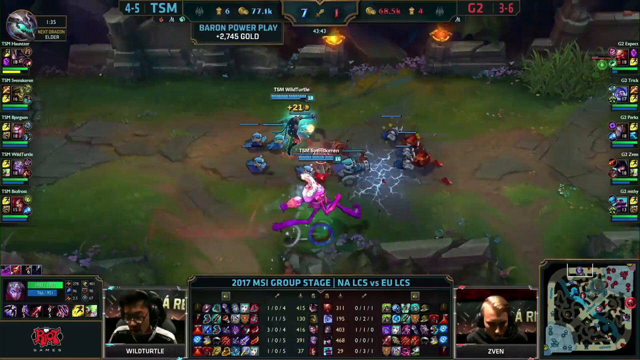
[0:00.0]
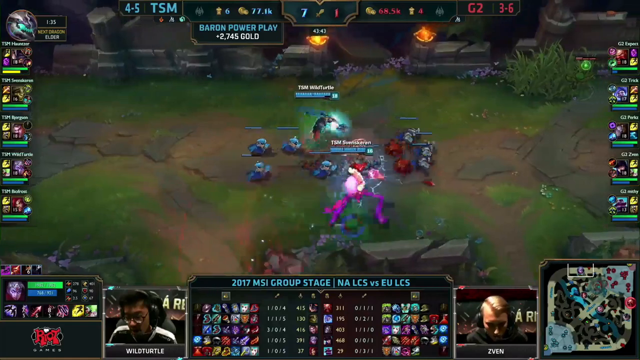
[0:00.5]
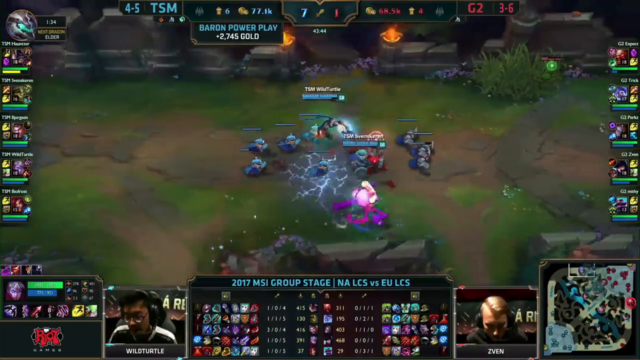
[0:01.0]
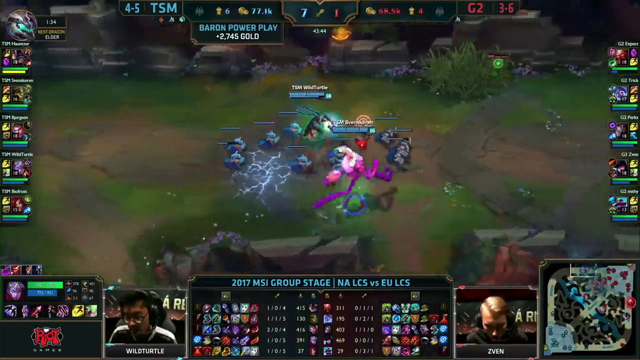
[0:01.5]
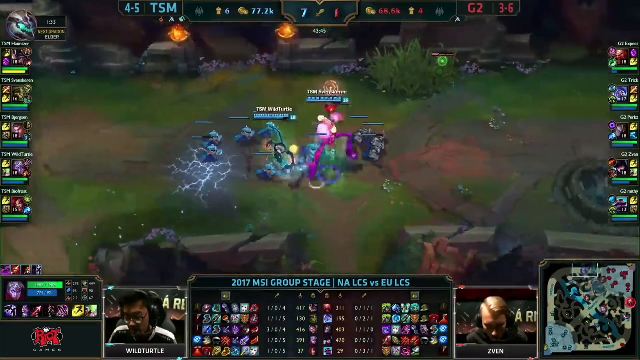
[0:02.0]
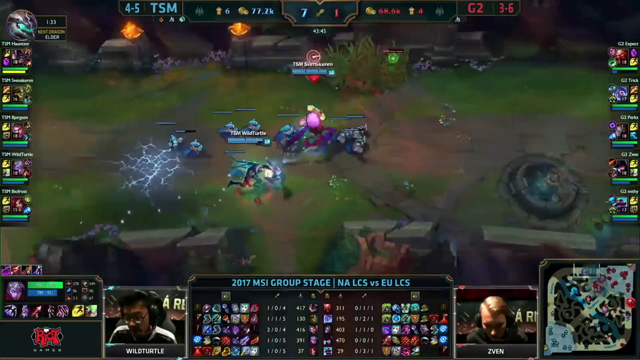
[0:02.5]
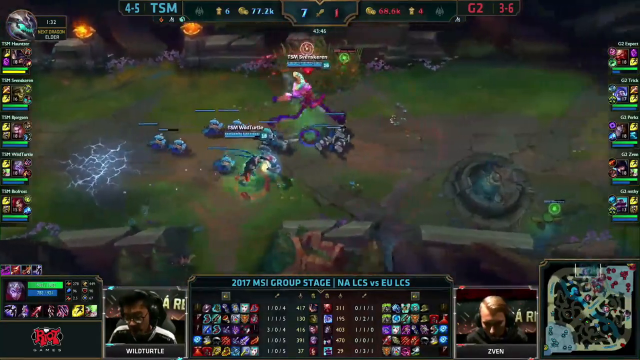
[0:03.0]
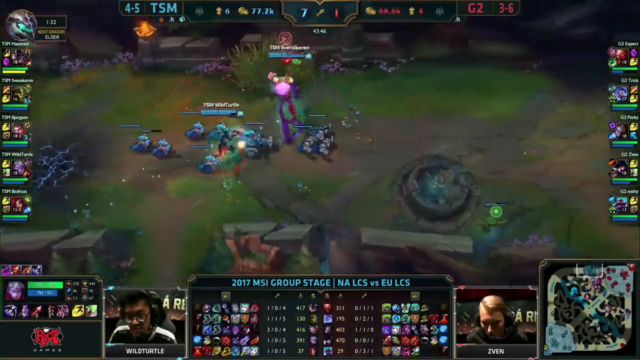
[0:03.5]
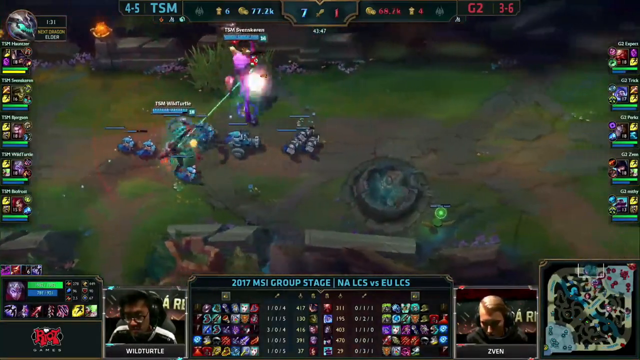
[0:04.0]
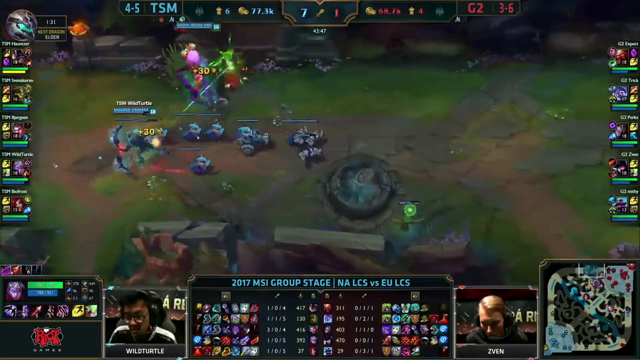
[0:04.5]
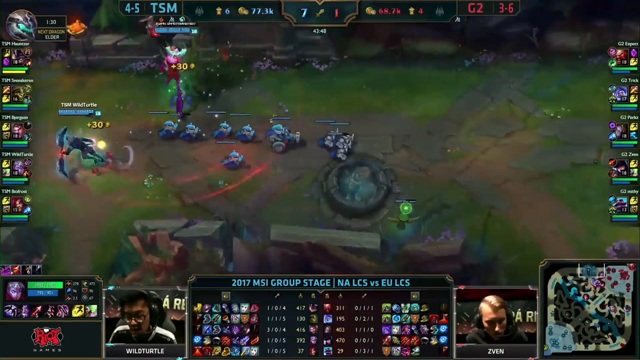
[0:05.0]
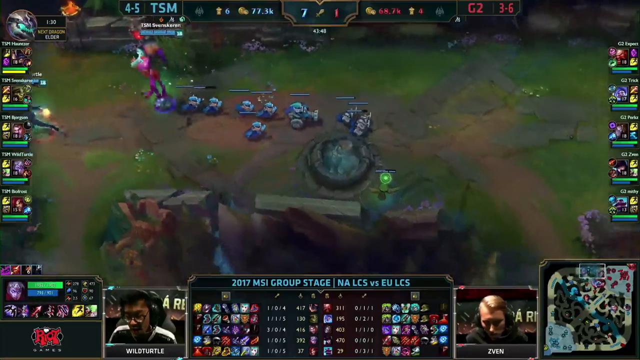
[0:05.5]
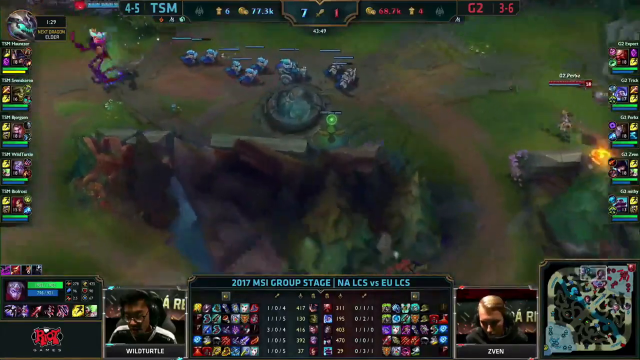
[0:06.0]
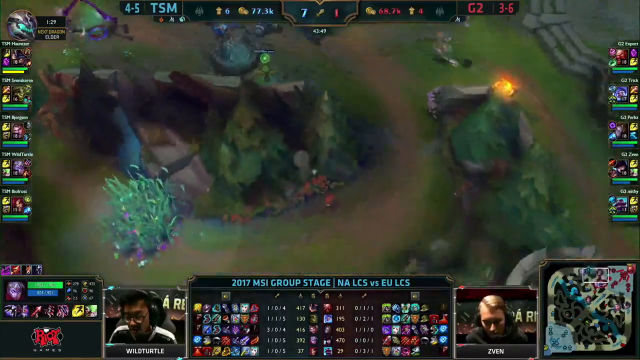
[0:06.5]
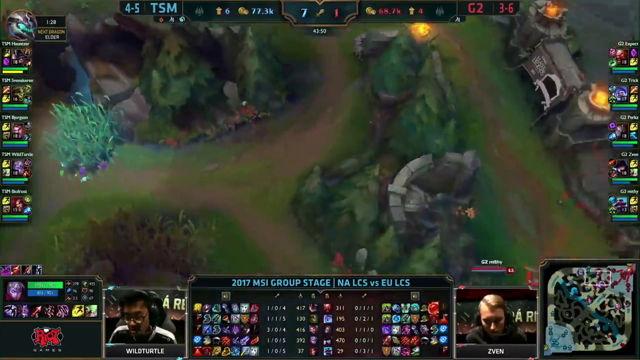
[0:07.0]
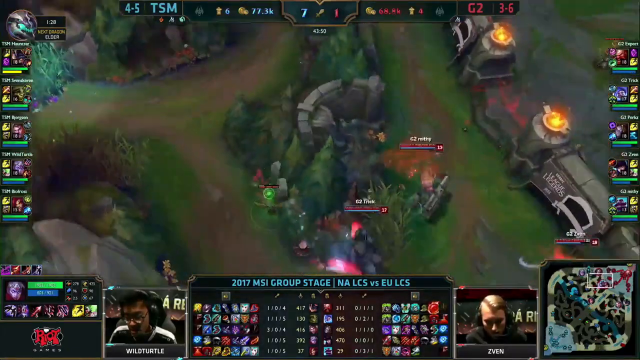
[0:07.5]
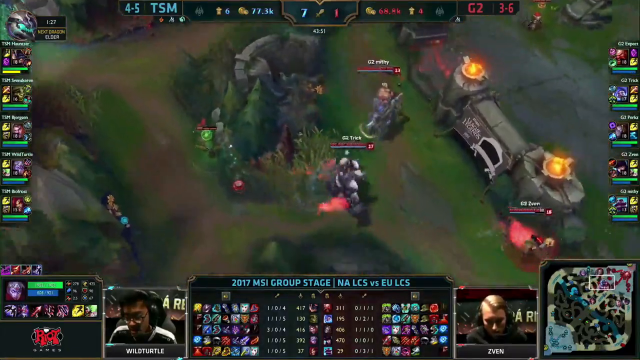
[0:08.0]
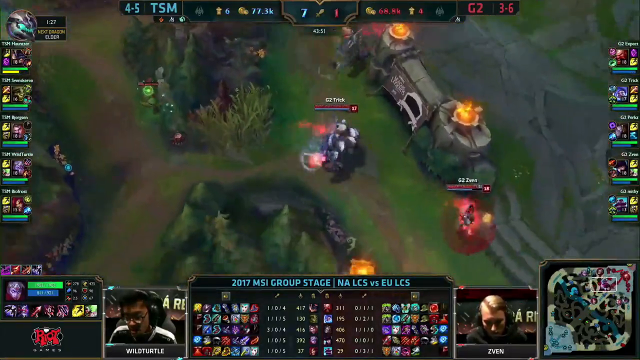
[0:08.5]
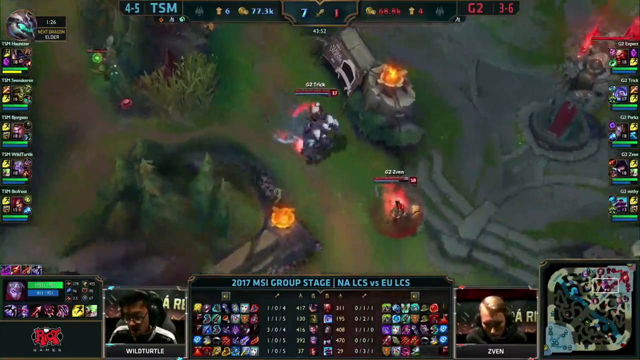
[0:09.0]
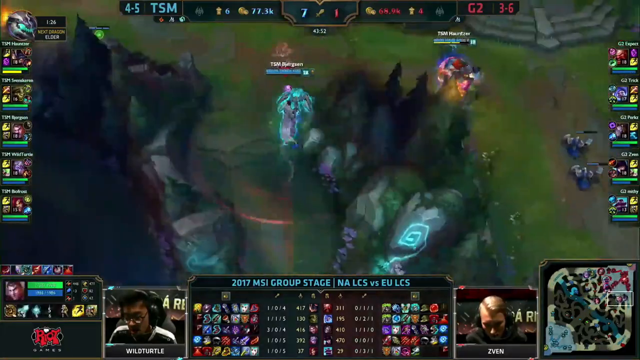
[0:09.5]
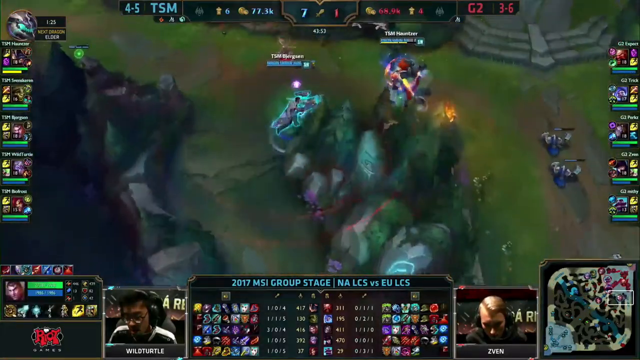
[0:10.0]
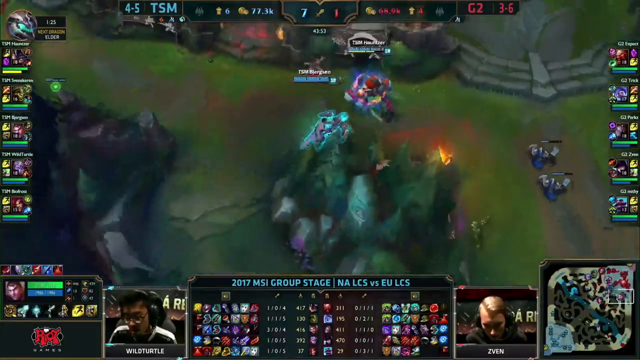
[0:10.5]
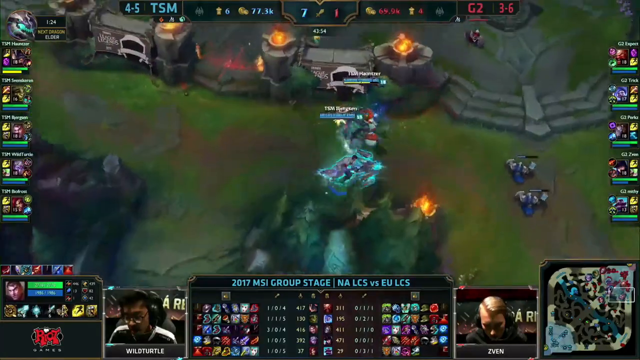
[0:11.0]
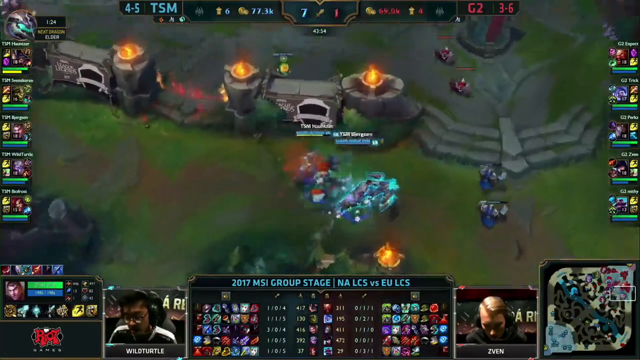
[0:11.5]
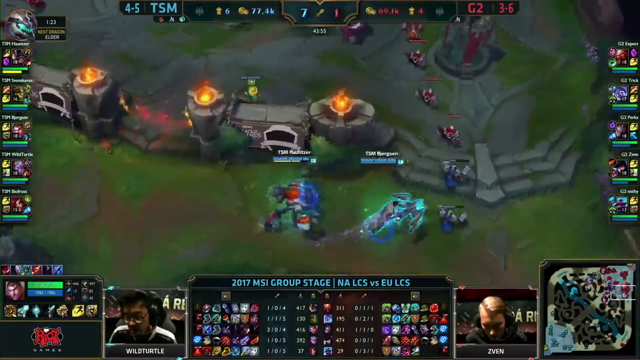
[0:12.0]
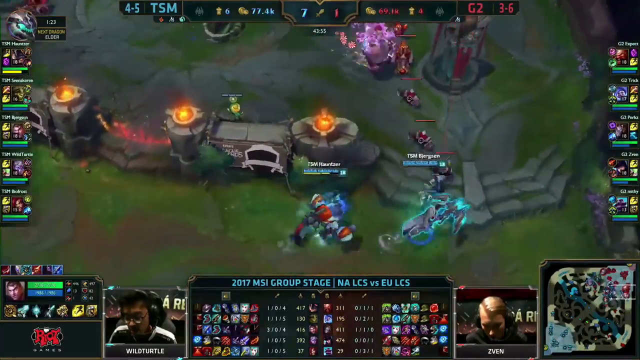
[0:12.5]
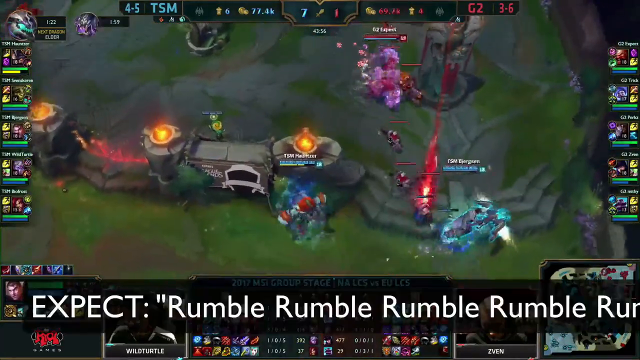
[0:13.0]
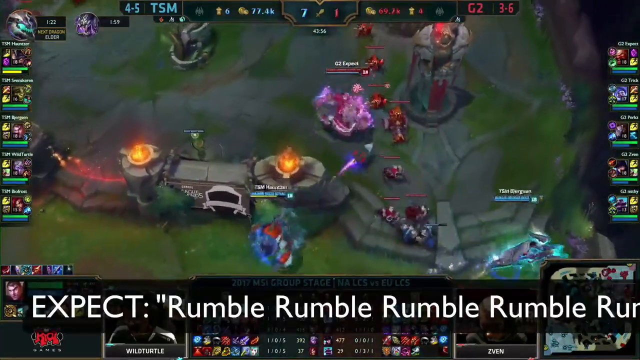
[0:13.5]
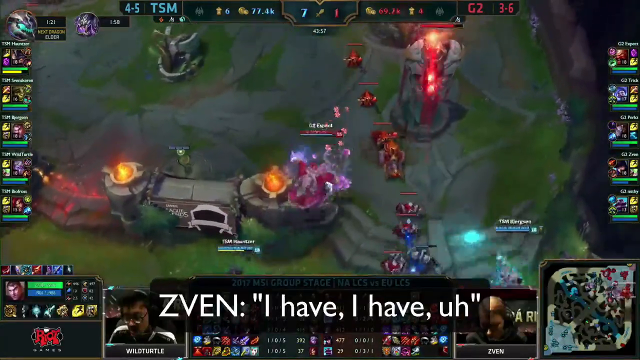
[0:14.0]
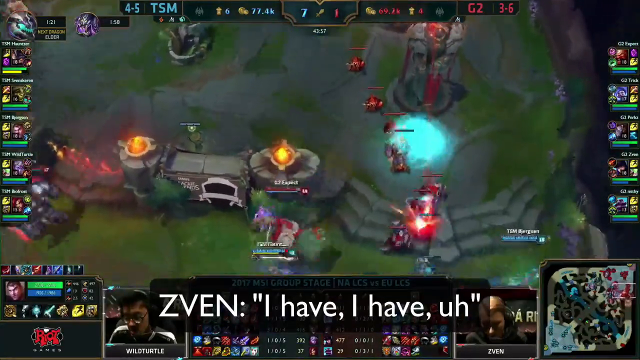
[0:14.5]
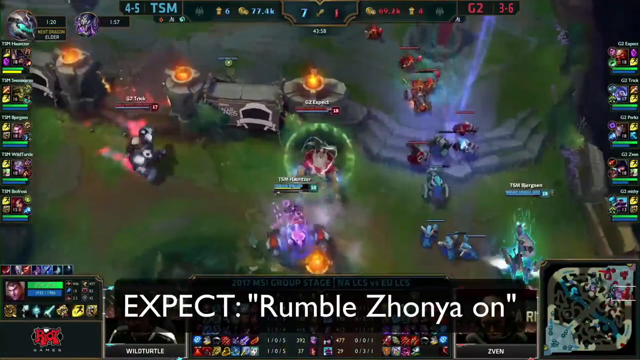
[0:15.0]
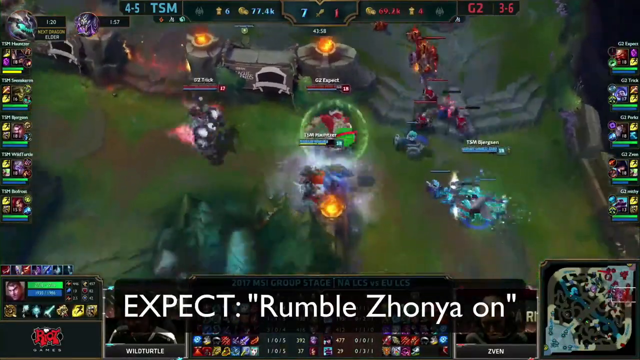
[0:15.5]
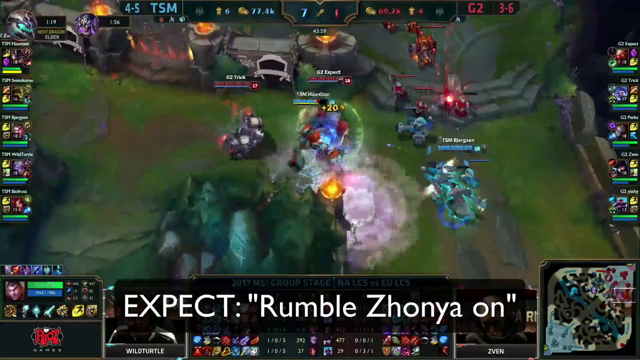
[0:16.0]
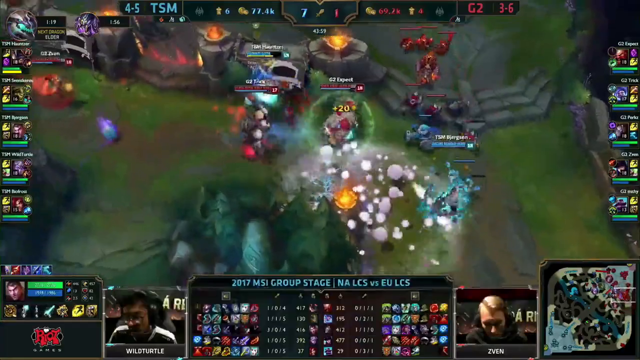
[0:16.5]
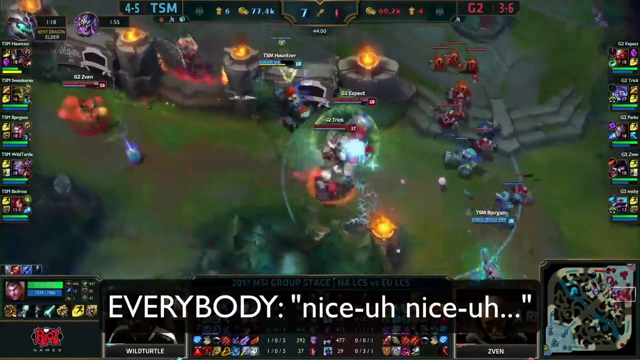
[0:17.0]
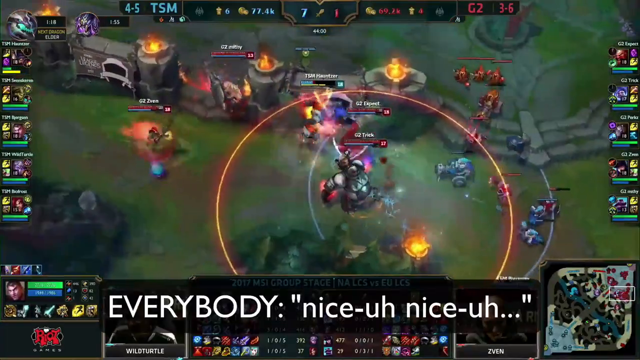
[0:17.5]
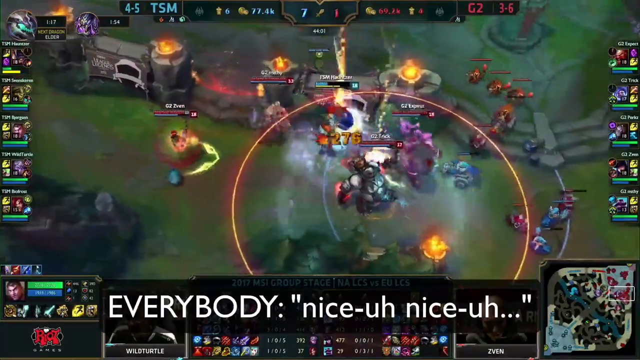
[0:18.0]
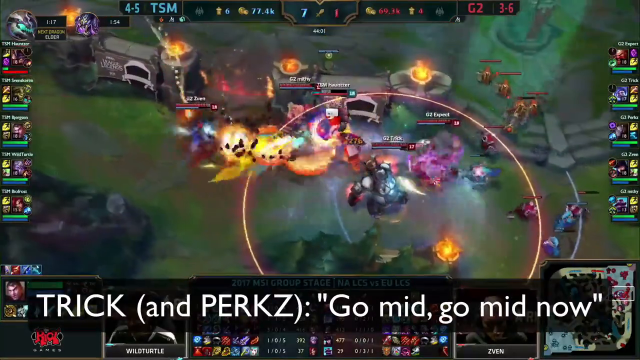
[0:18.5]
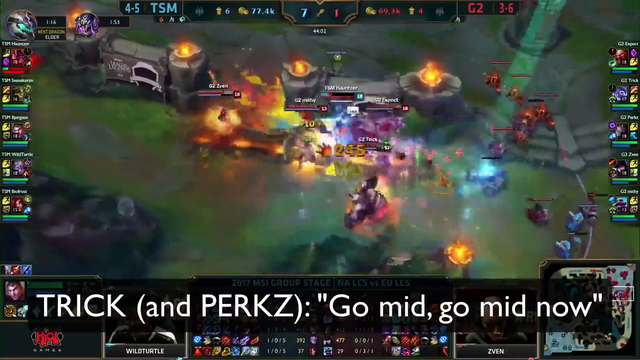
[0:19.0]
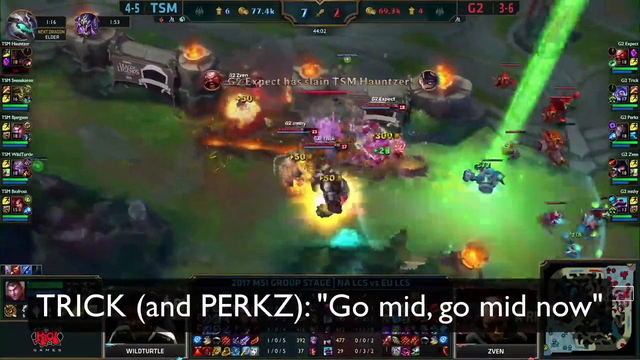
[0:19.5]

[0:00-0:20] Gameplay is shown overhead from an isometric perspective; it appears to be a MOBA, most likely League of Legends. A sports overlay sits on top of the game, including a very complex block of text that says "2017 MSI group stage, NA LCS versus EU LCS," along with many icons showing ability usage and some numbers too small to read at this resolution. To the left and right of it are two players, WildTurtle and Zven. One is an Asian man who looks to be in his 20s or 30s; the other is a blonde Caucasian man who appears to be in his 20s or 30s. Both wear headsets and look down pensively and intensely at their PCs. In the game, they control characters in a fantasy setting, shooting lightning spells and other magic as smaller enemies, the creepers, come up. Many numbers fly over the action, and the strategy game UI is very complex.